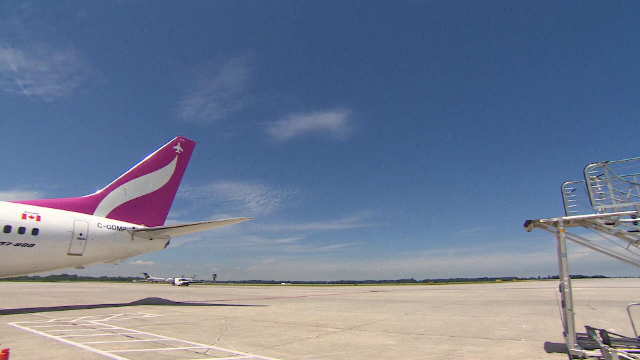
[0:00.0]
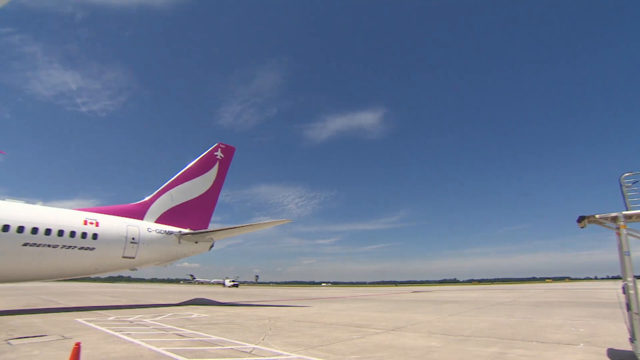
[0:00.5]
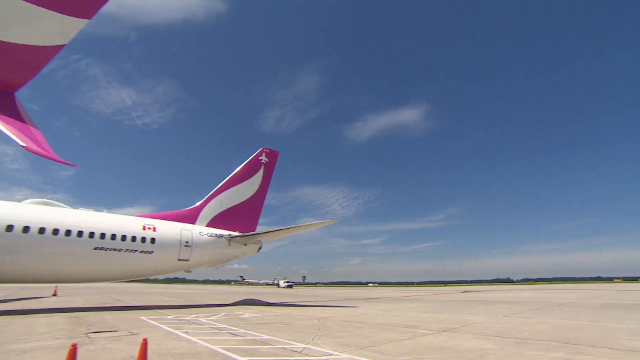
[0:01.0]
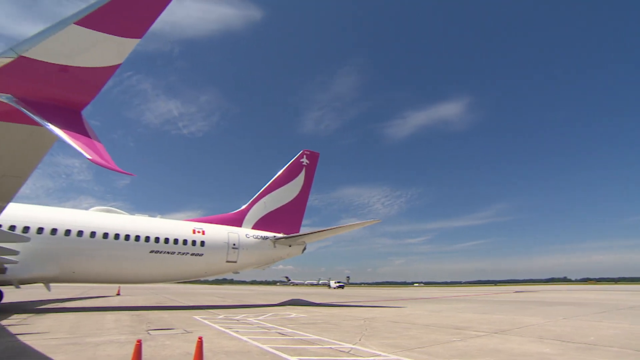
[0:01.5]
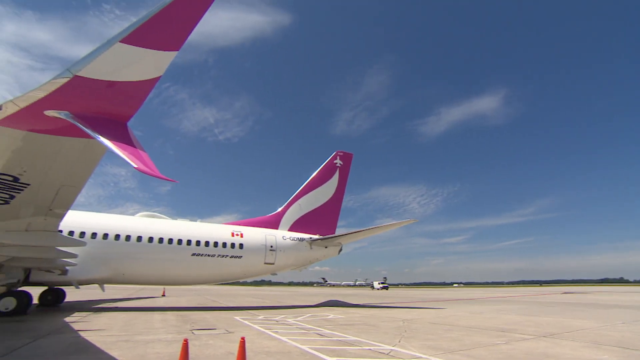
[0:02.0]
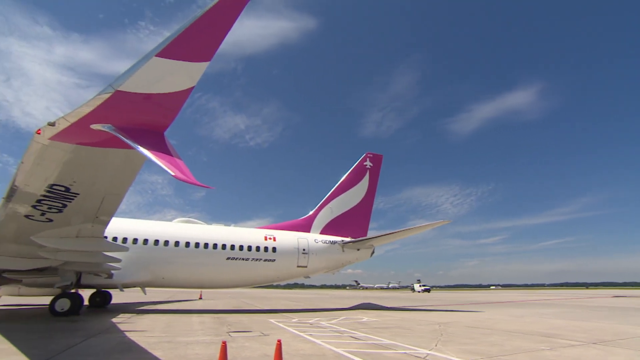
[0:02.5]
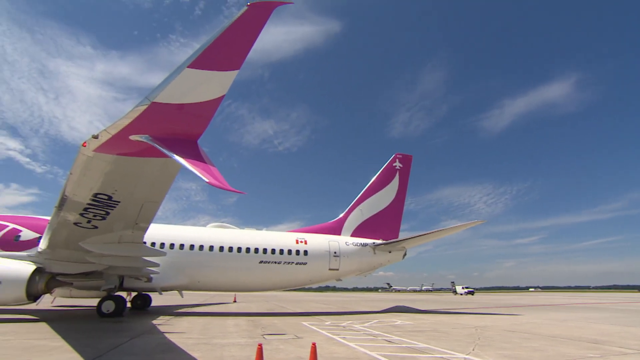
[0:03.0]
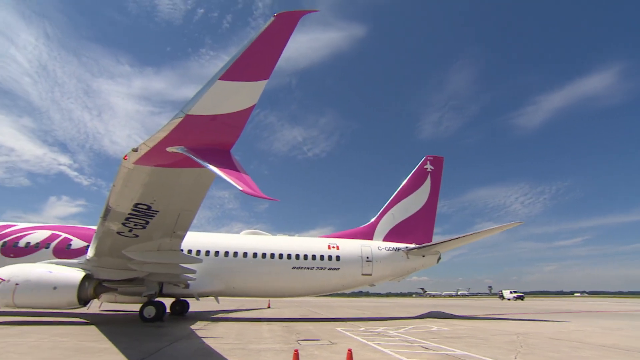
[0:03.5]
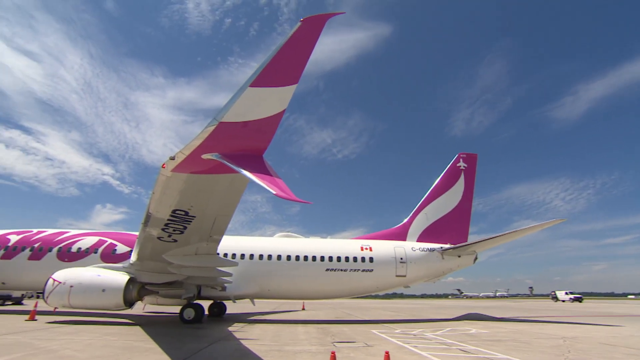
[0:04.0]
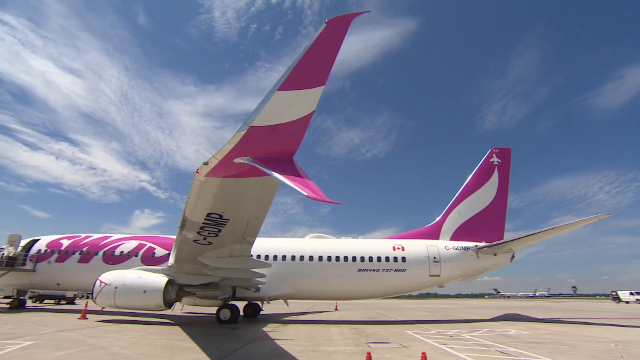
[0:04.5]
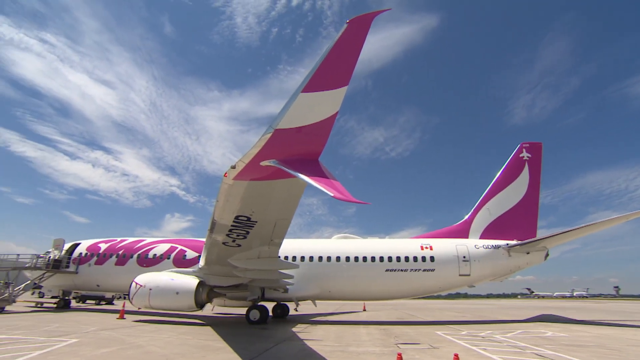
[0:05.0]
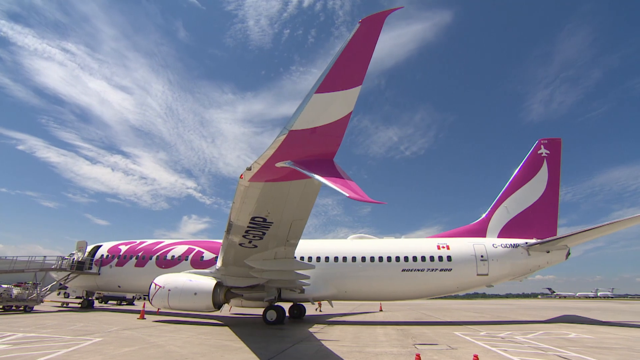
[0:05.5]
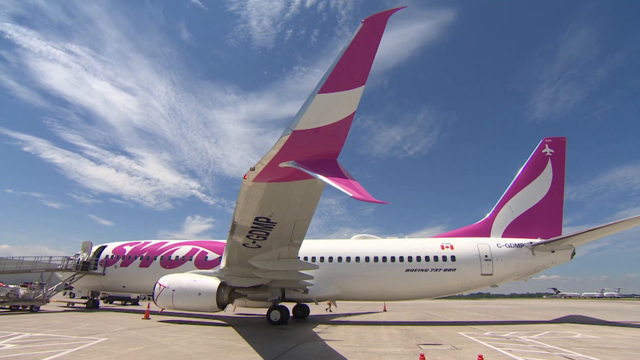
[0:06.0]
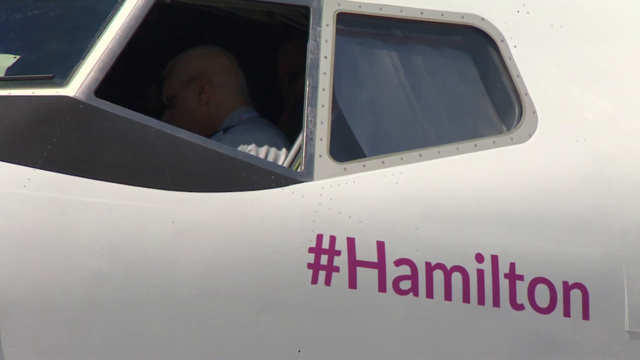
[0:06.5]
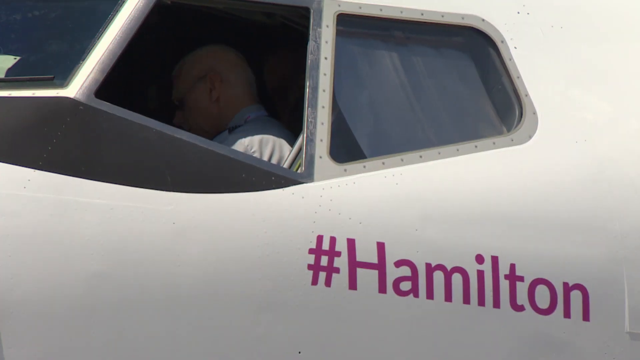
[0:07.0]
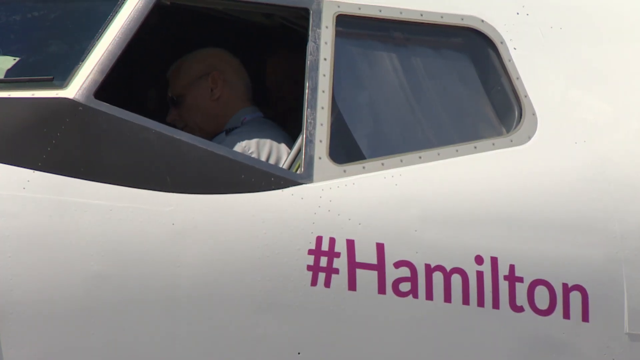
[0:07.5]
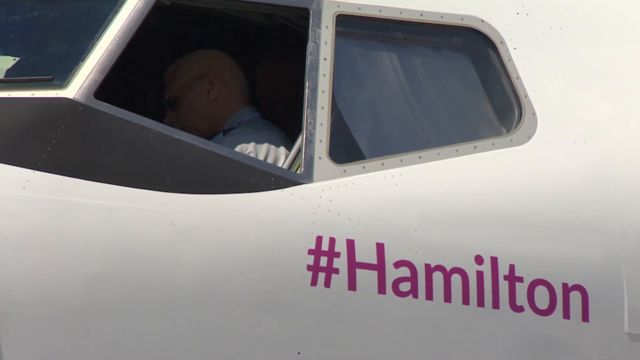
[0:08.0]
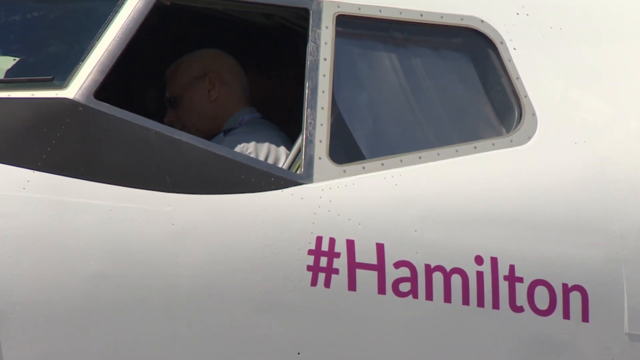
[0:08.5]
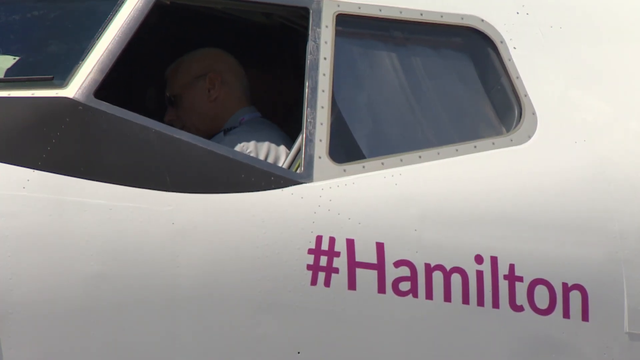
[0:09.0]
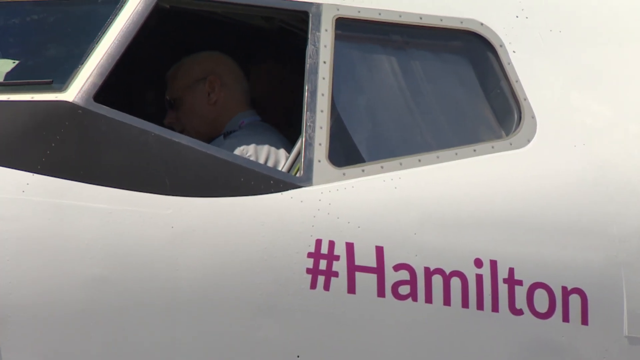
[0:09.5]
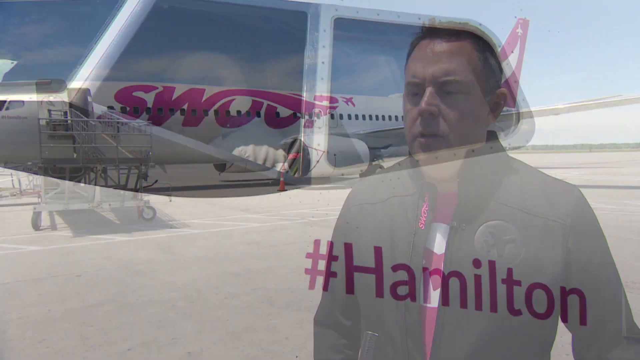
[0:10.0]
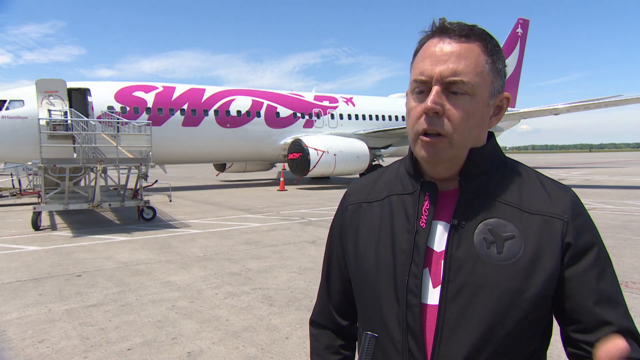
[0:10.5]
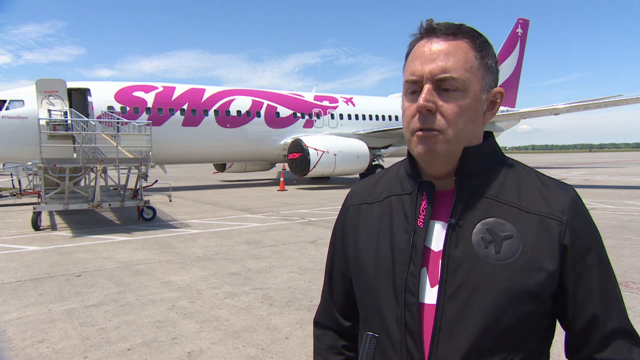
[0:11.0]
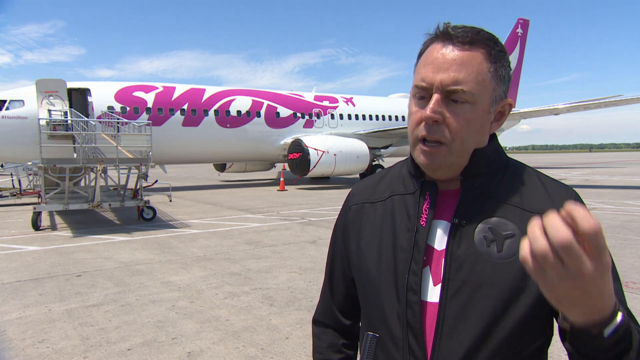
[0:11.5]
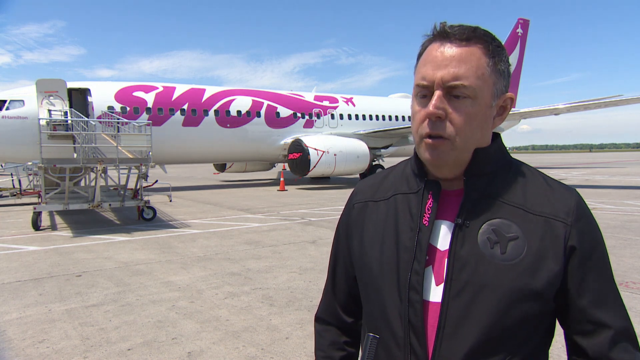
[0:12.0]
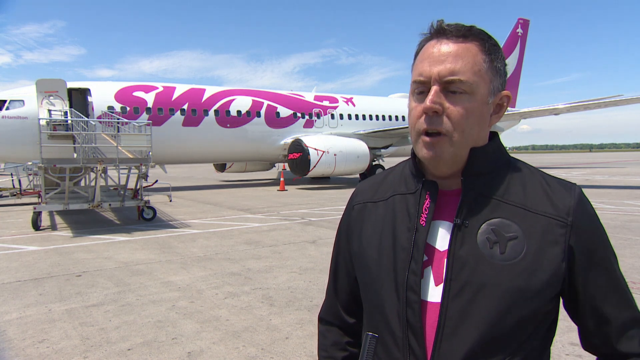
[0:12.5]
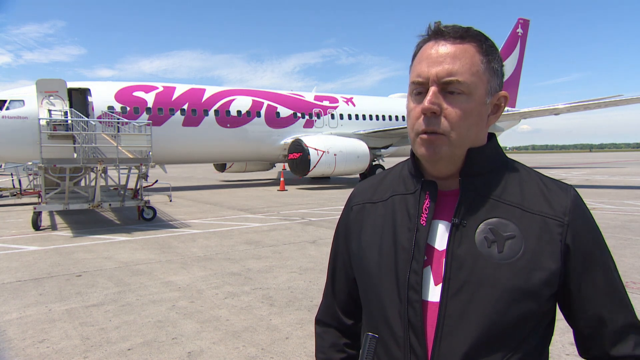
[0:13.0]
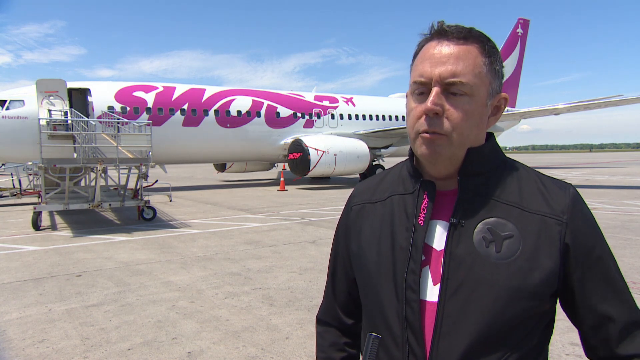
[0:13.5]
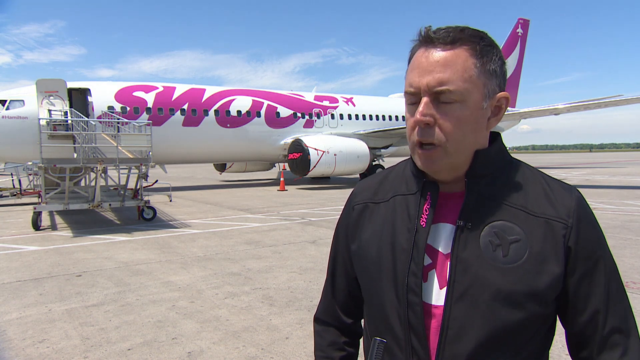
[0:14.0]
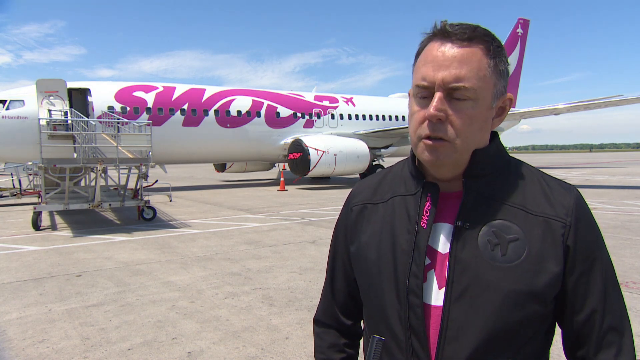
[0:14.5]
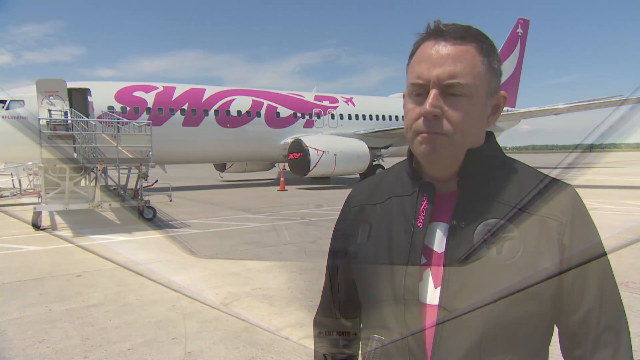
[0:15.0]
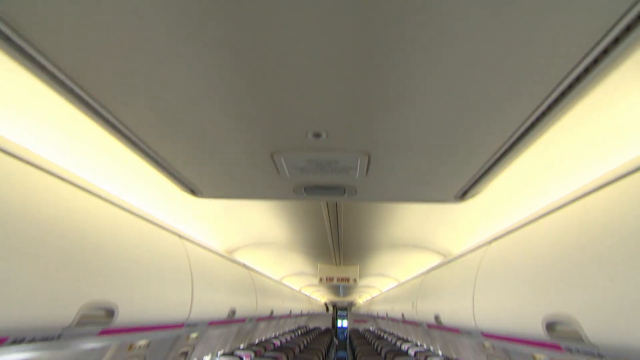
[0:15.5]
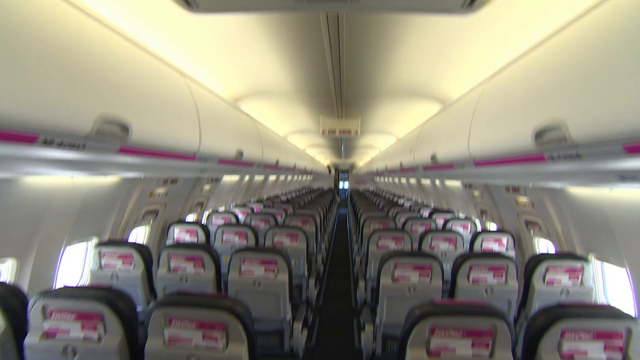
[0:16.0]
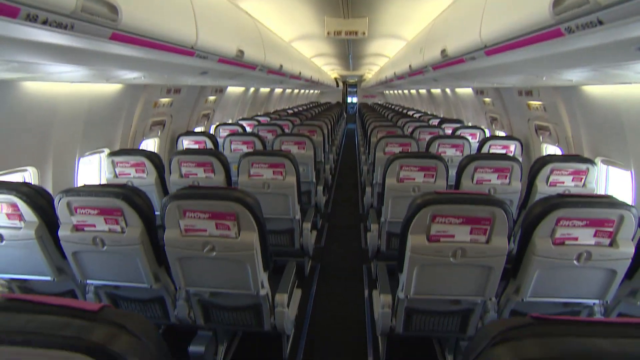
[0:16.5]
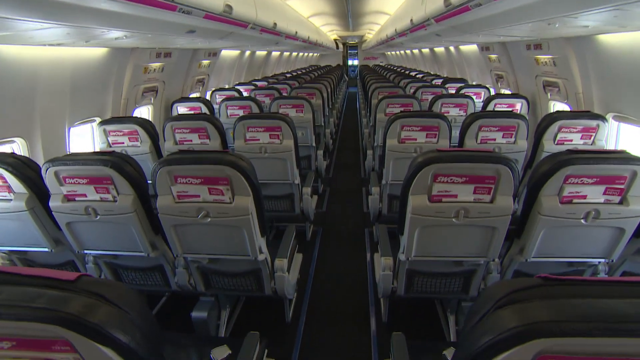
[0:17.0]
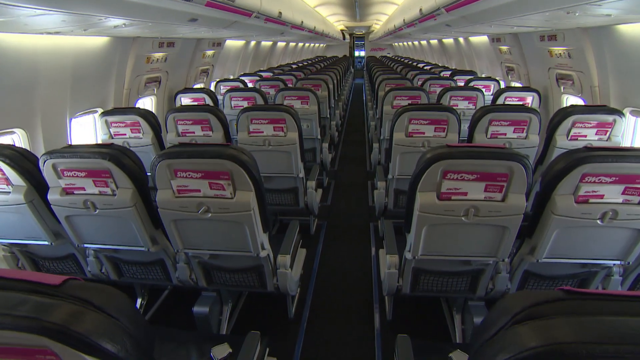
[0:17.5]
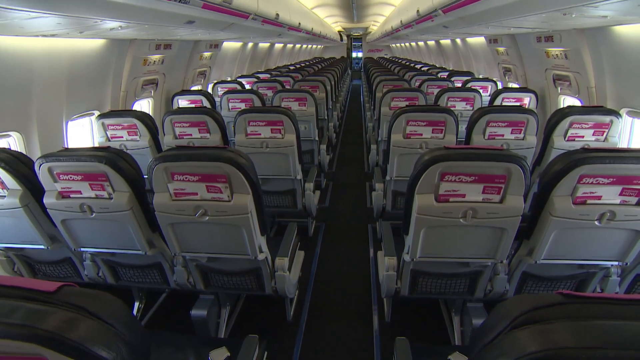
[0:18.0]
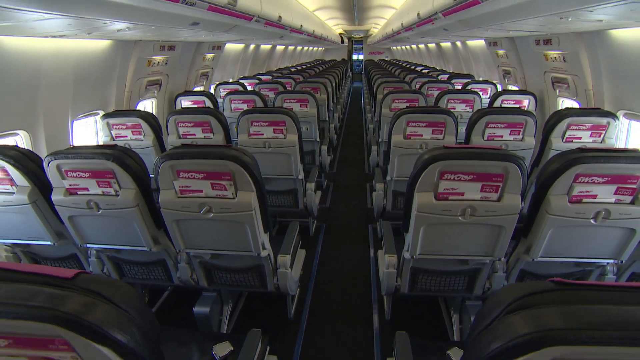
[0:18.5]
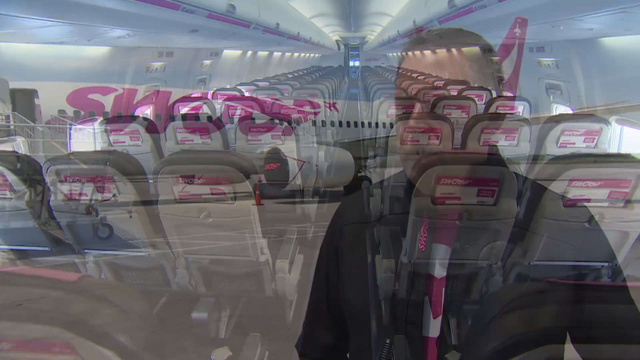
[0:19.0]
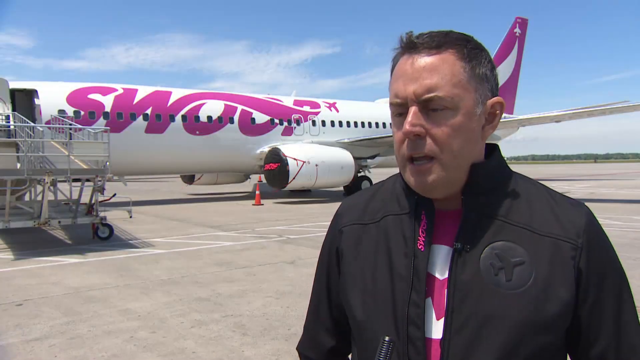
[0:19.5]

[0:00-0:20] The video is taken on a large airport tarmac. On the right side, loading stairs stand by themselves, and the camera, with its fisheye lens, slowly pans left to show a large airplane on the tarmac. A metal ramp is attached to one of the doors on its side. The airplane is mostly white, with pink lettering on the side, a pink wingtip and a pink tail fin, and there is a Canadian flag on its side. The camera zooms in on the cockpit, where the text "#Hamilton" appears in pink underneath the window. The cockpit window is open, and through it the pilot is seen preparing the plane; he is an older man with glasses, wearing a gray t-shirt. The video then cuts to a faraway view, with the airplane in the background and a man standing in front of the camera. He wears a black jacket and a pink shirt, both carrying the same branding as the airplane. The side of the distant airplane is now visible, and the pink lettering on it reads "swoop".